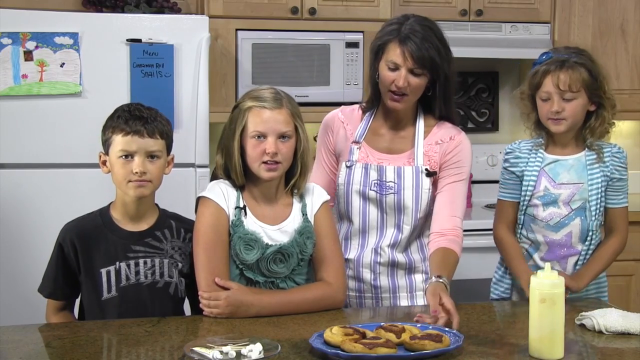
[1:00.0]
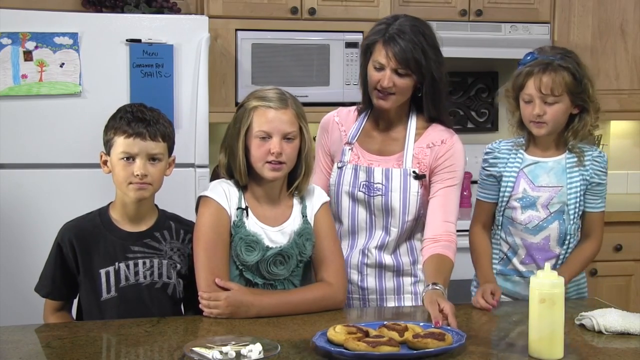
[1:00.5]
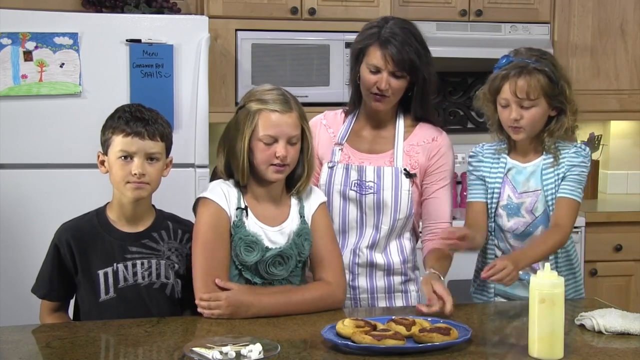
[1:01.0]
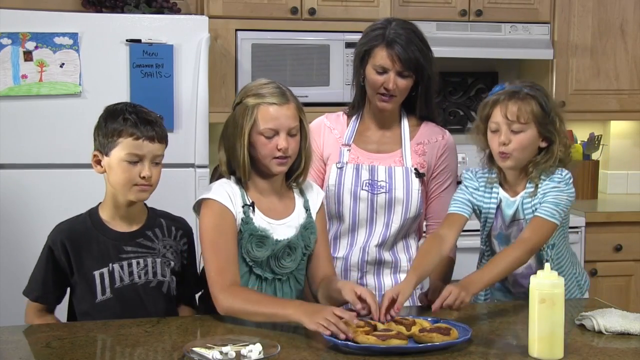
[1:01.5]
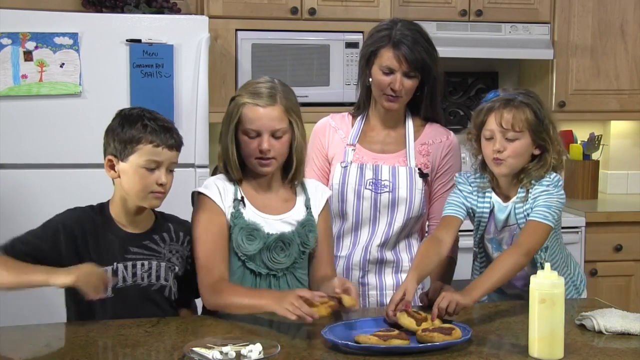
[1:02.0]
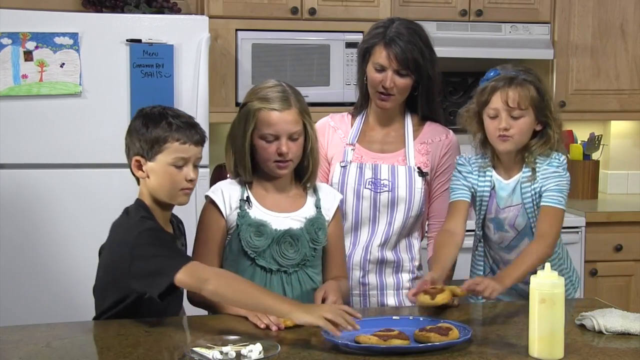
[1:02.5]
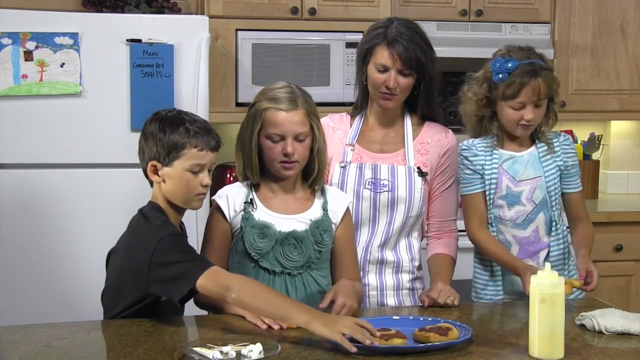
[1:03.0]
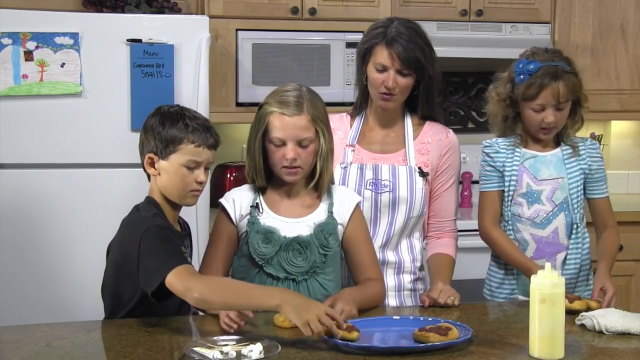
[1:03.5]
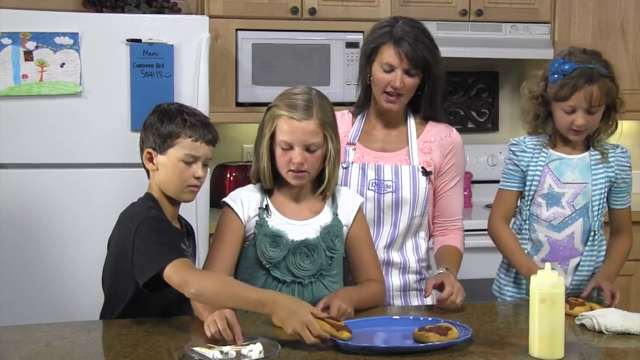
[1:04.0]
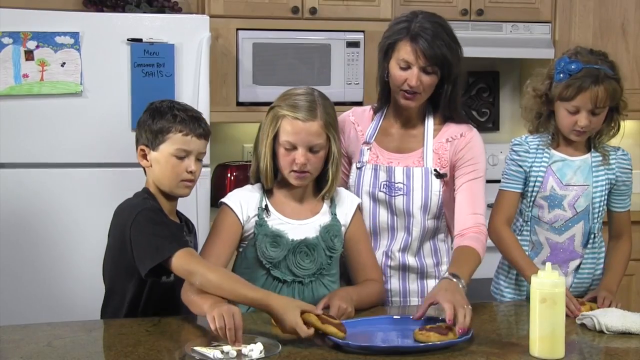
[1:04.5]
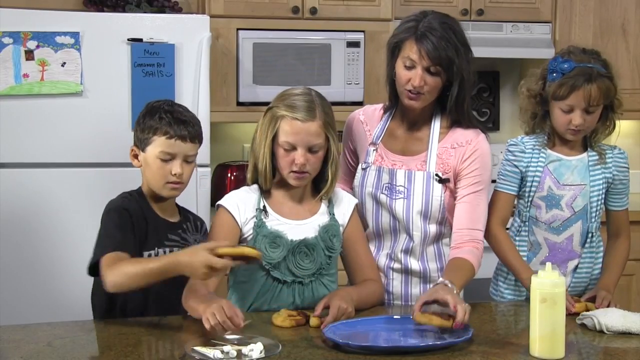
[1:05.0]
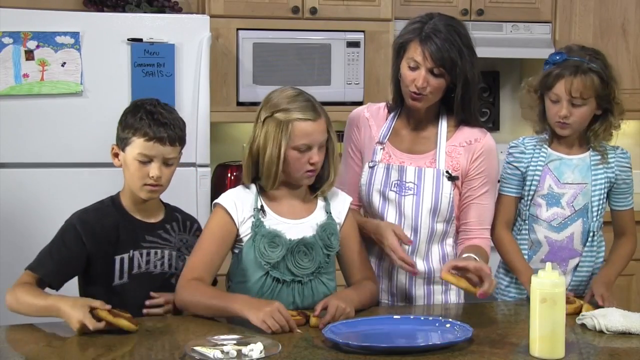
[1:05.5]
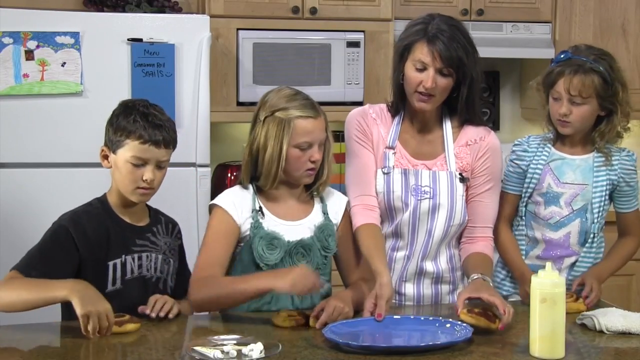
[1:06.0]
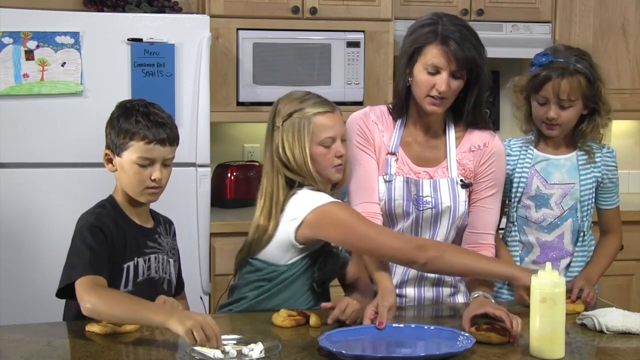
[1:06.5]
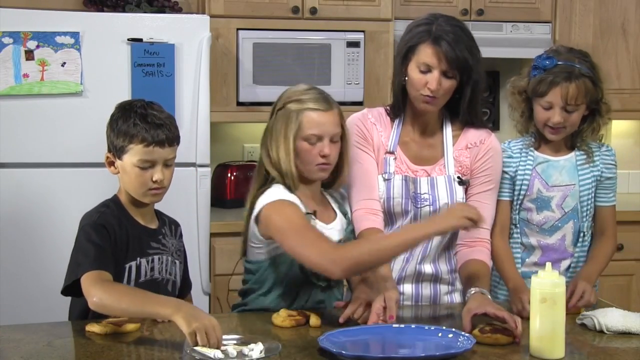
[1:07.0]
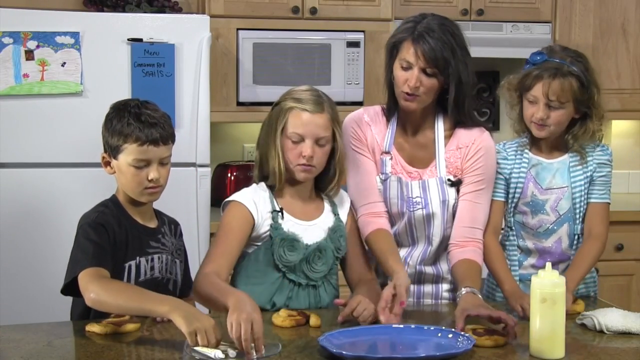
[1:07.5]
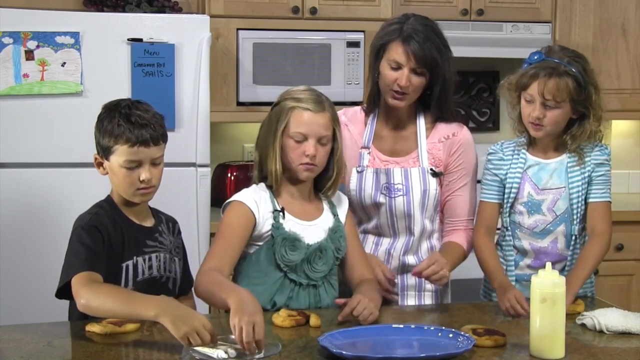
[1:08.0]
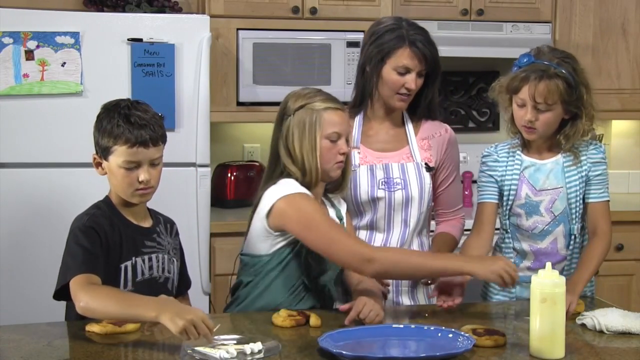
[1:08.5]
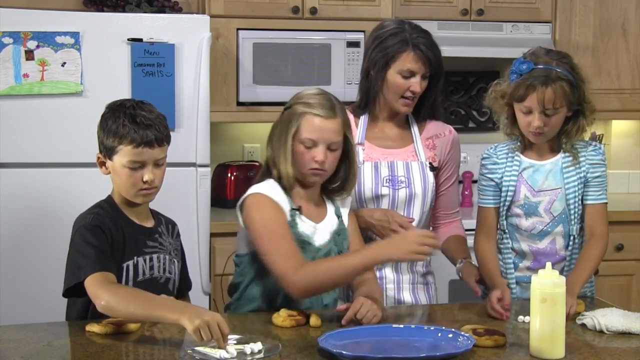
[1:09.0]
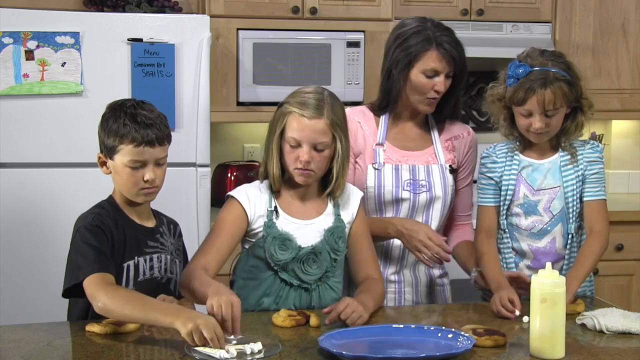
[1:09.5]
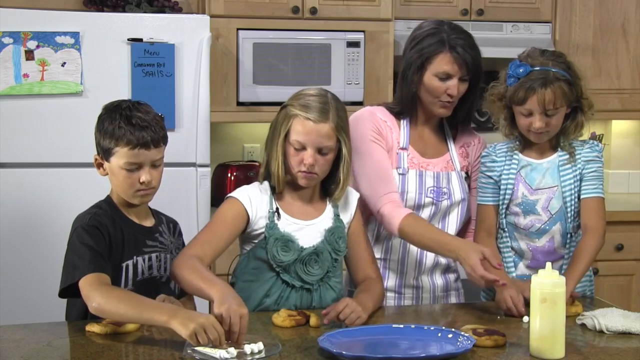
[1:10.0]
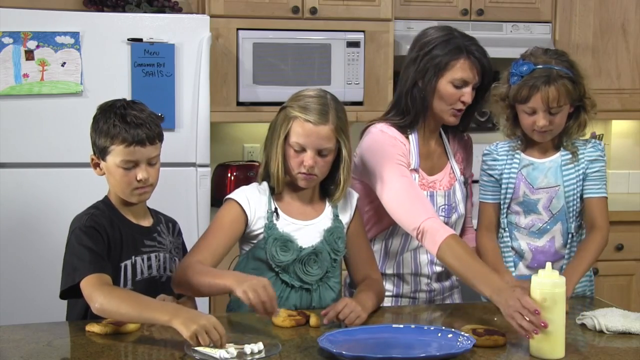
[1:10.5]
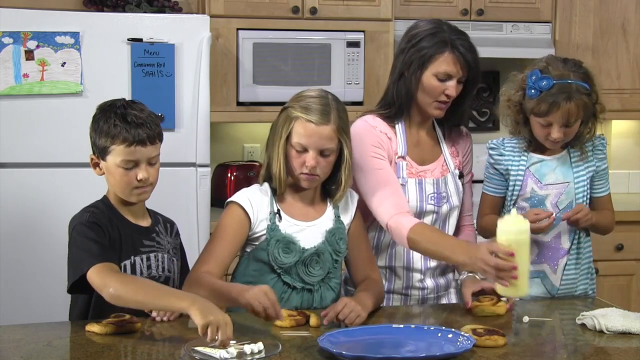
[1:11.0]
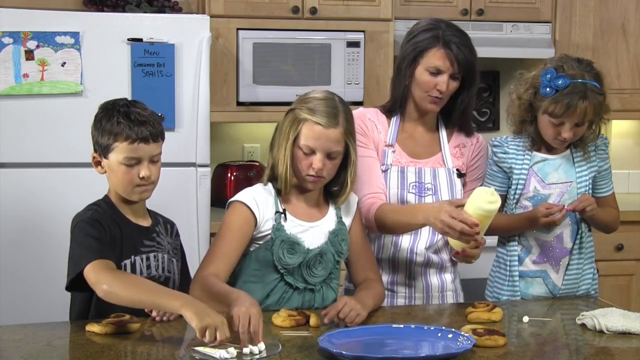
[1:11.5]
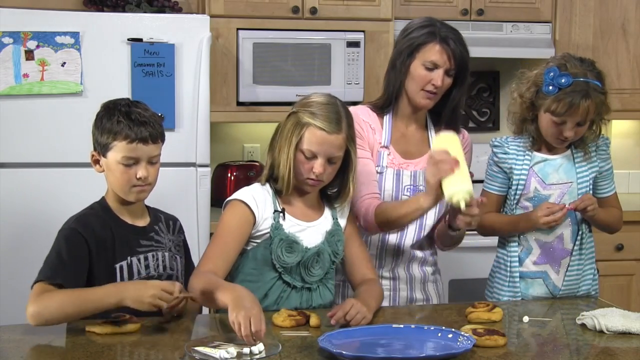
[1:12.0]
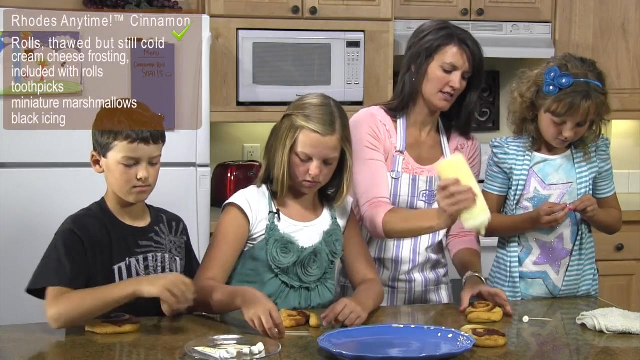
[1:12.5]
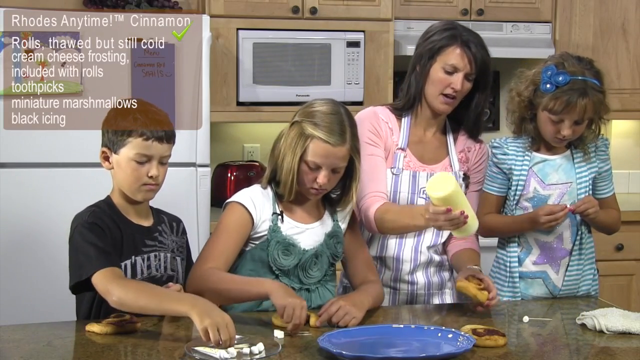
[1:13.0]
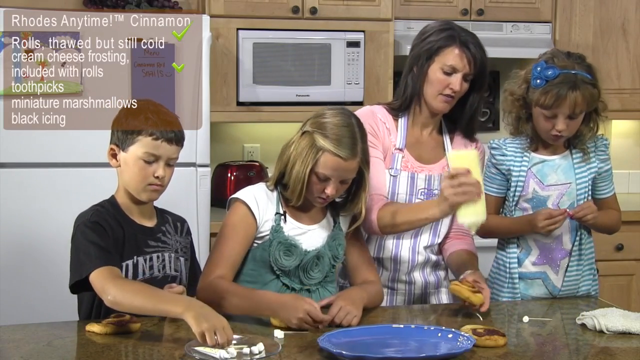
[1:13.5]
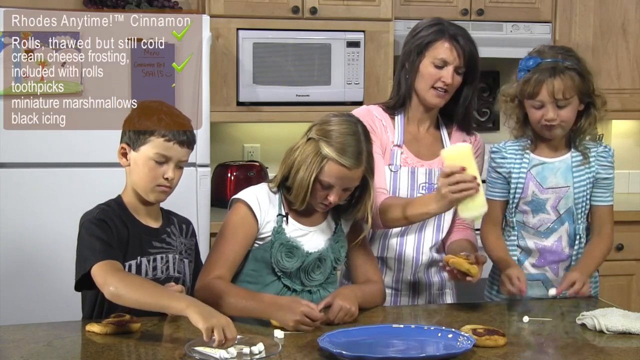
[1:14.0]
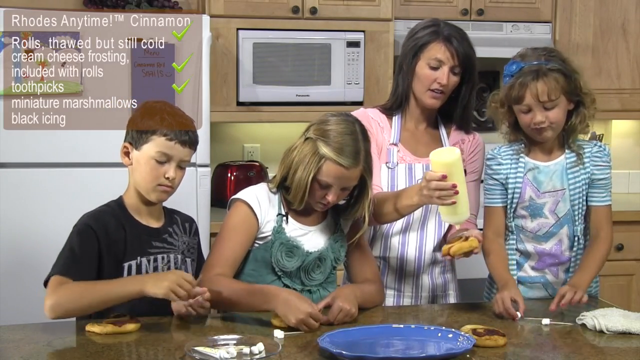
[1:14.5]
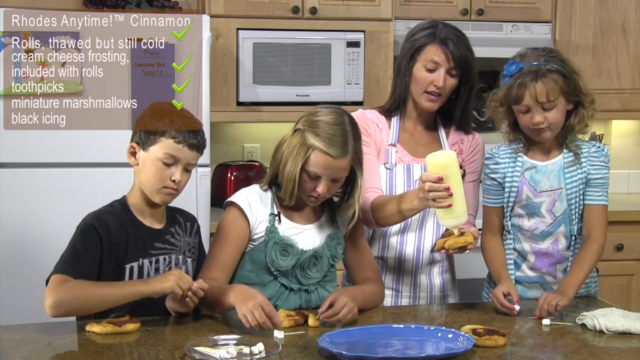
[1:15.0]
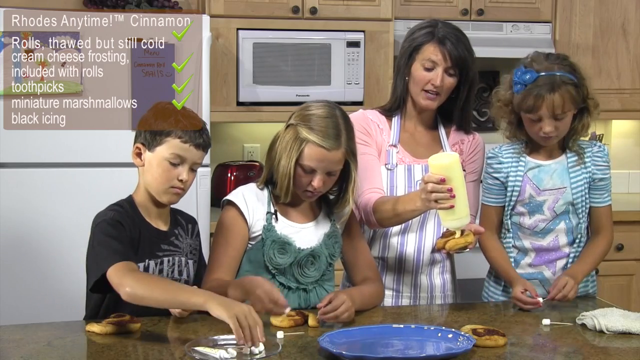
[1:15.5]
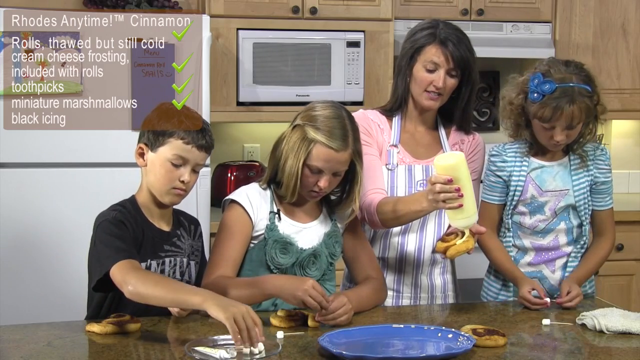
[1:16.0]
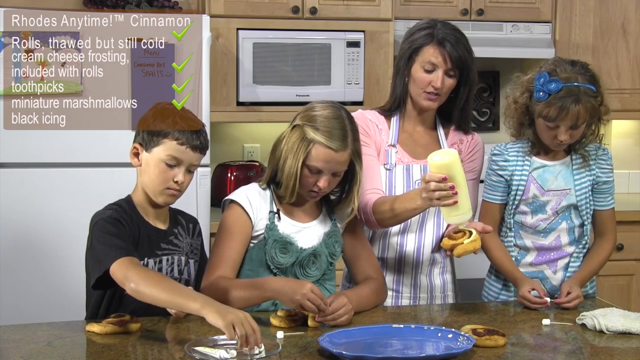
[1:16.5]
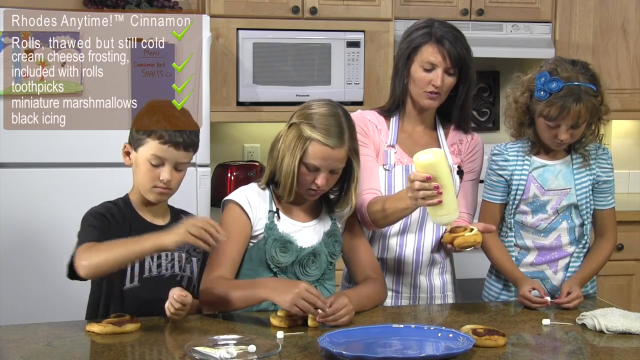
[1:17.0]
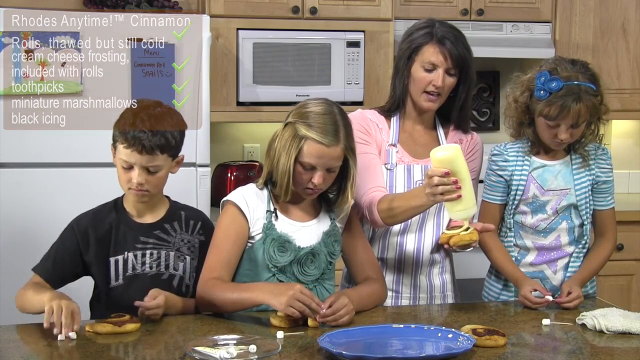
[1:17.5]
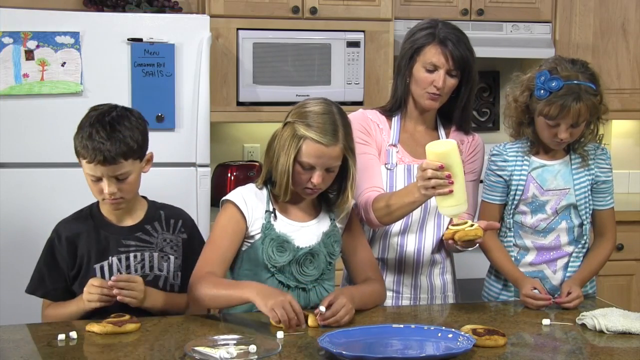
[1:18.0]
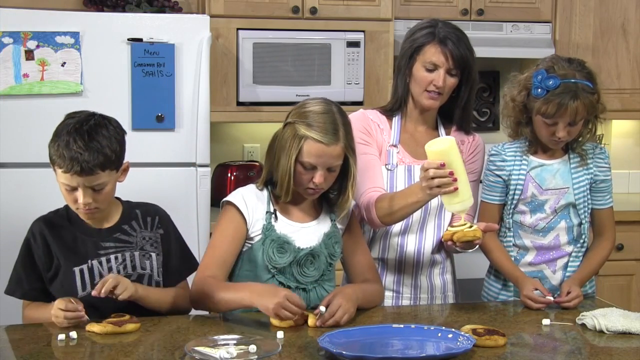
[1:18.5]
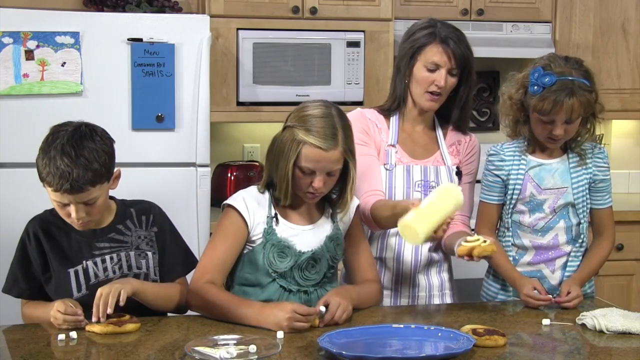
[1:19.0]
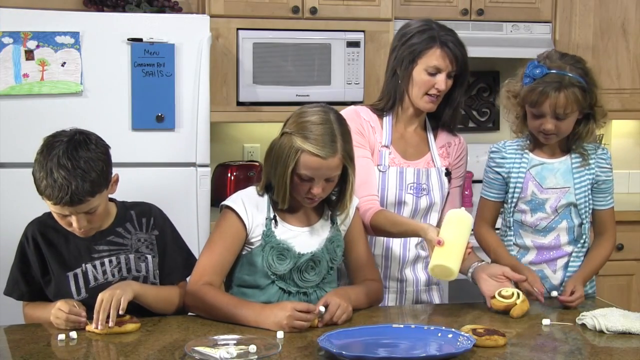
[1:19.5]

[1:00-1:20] The mother and her kids are still working in the kitchen. A blue plate in front of them holds cinnamon rolls, possibly the ones they had placed in the oven. The mother speaks, and then the children pick rolls out to choose which ones they want, placing them next to each other in front of themselves. The one on the right-hand side is shaping hers, and the girl in the green dress places some white product in front of her. The mother then takes a sauce from the table and places it neatly on top of the cinnamon rolls.